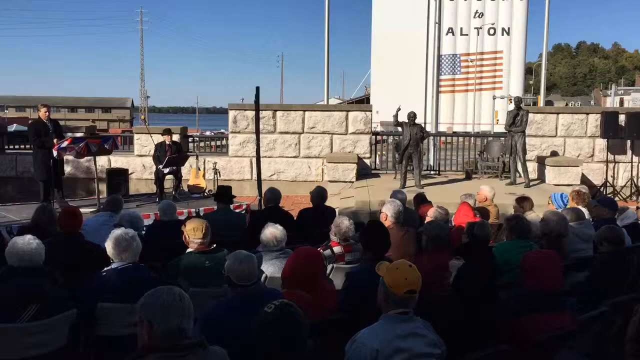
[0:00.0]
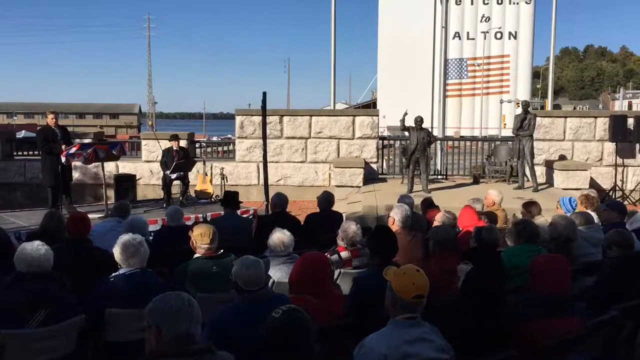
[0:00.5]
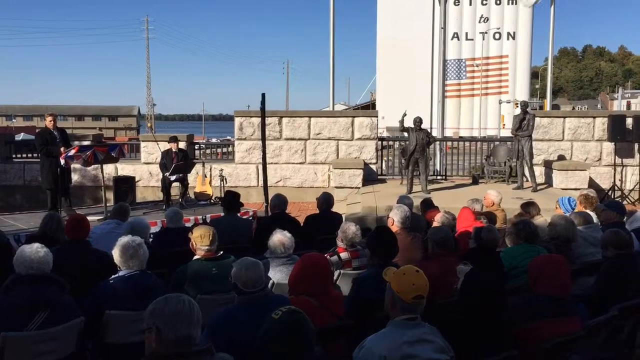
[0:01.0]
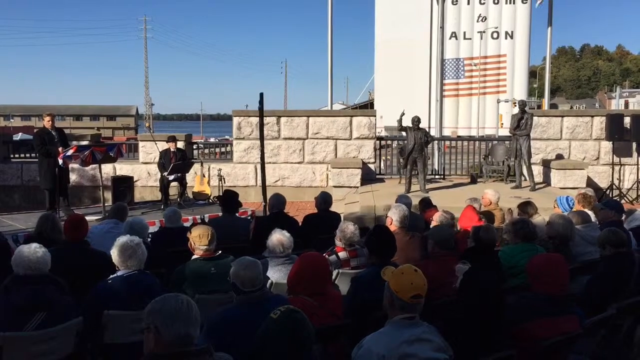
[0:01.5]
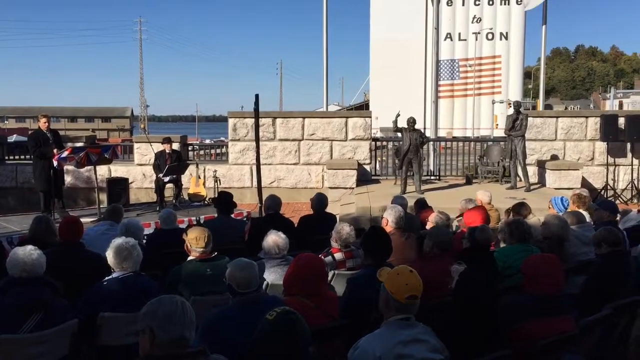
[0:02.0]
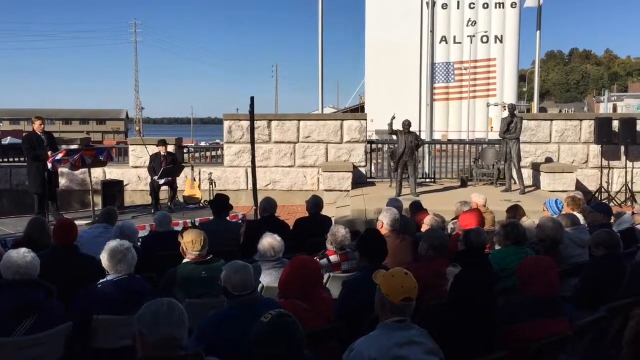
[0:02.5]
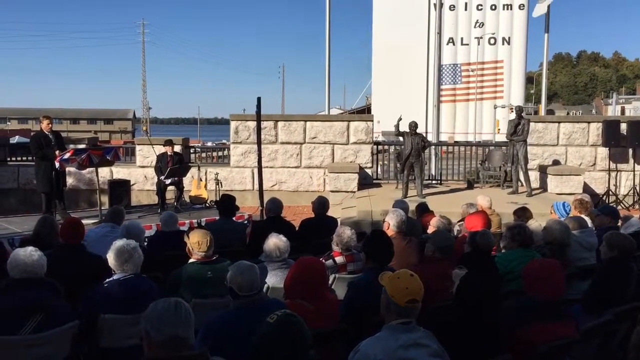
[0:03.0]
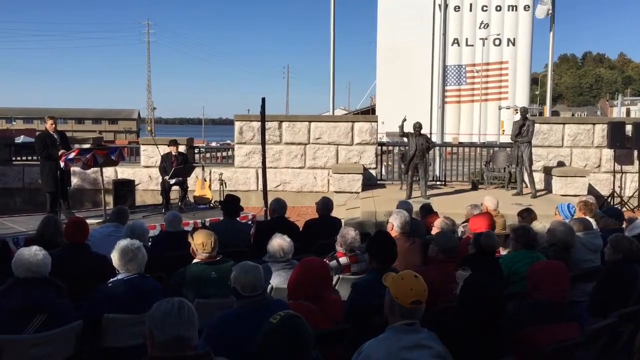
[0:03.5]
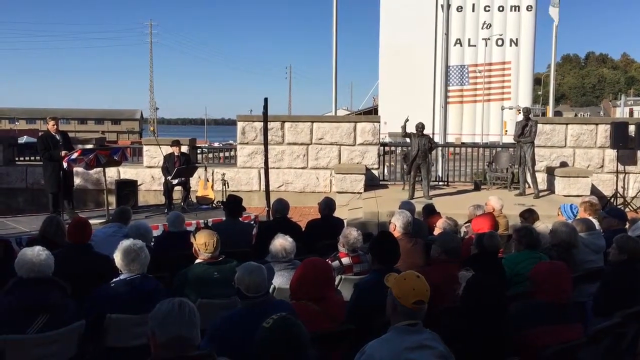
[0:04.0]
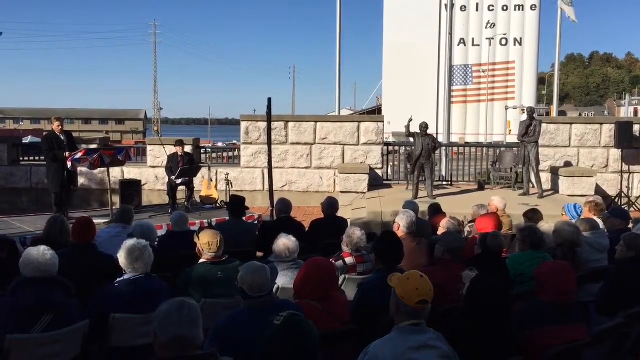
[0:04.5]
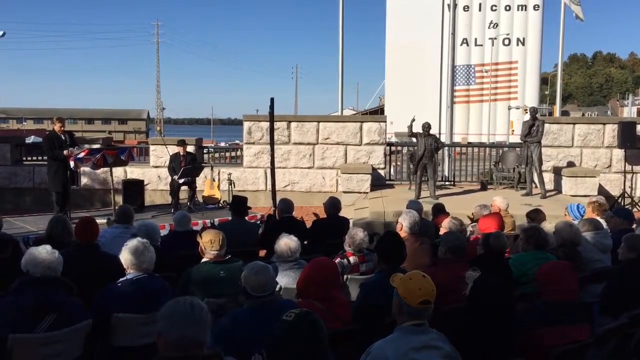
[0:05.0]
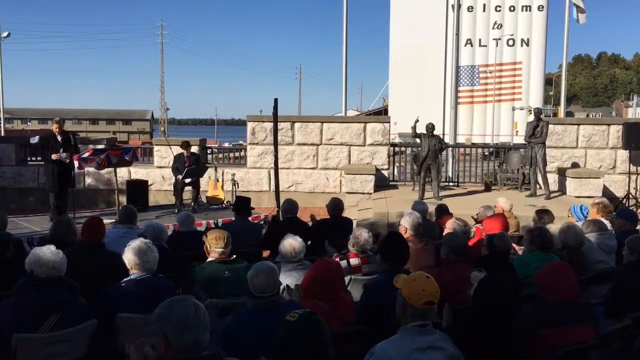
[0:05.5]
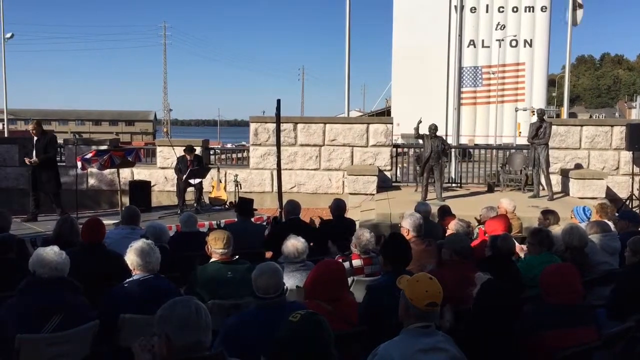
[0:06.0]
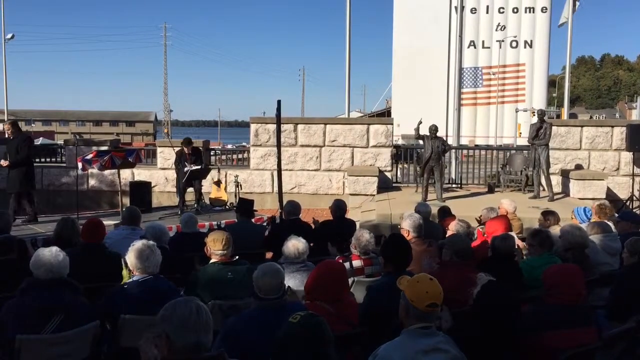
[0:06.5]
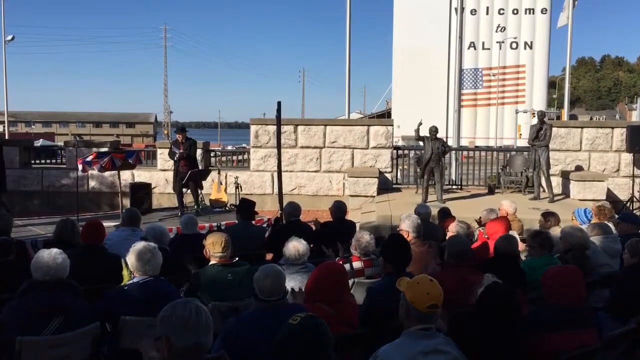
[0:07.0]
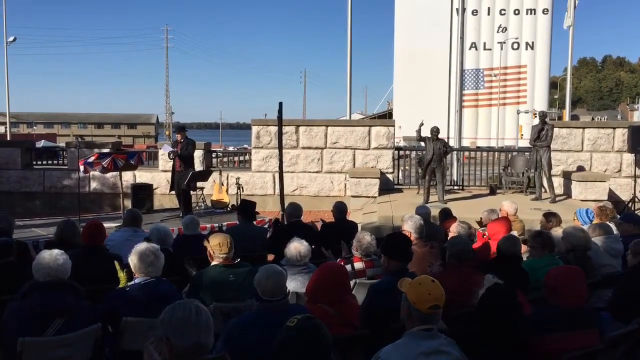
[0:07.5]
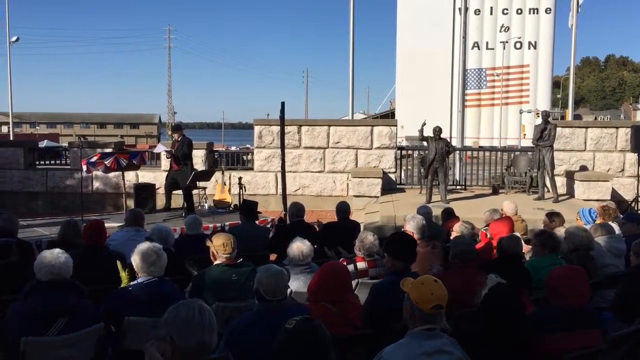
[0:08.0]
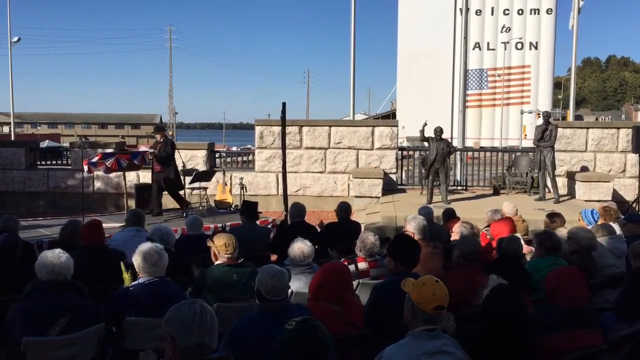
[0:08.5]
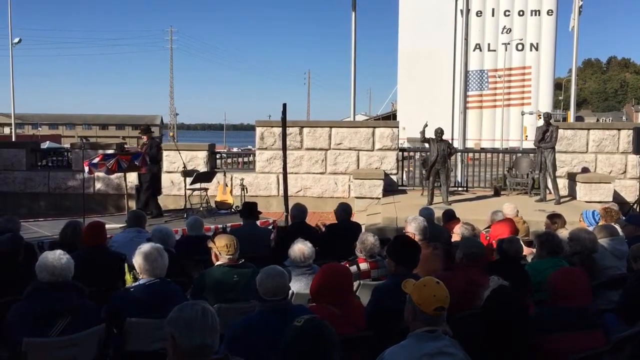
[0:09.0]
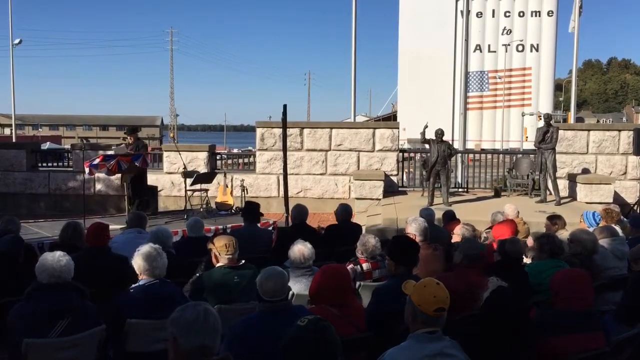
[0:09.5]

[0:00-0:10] A group of people sits listening to someone speaking behind a podium that has red, white, and blue bunting around the edges. On the right side of the screen are two statues of men. One statue has his hand raised as though he is speaking to the crowd, and the other shows a man standing behind him, looking at him. Behind both statues is a large white wall or structure of some kind with an American flag on it and the words "Welcome to Alton" above that. A flag also waves next to it, but its details are difficult to see other than its white background. As one man finishes speaking, he walks away, and another man stands up and walks to the podium. The second man wears a long black jacket and a black derby hat.